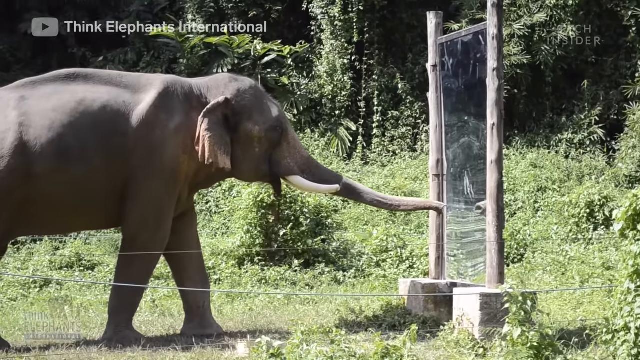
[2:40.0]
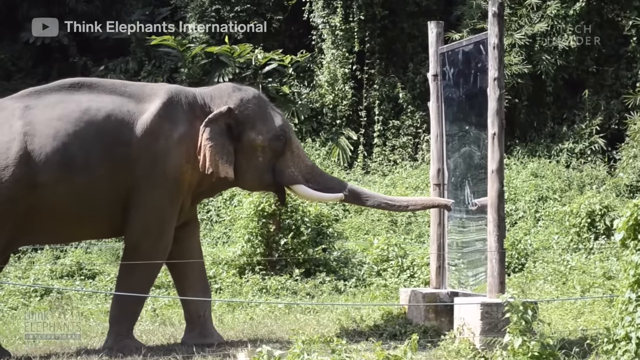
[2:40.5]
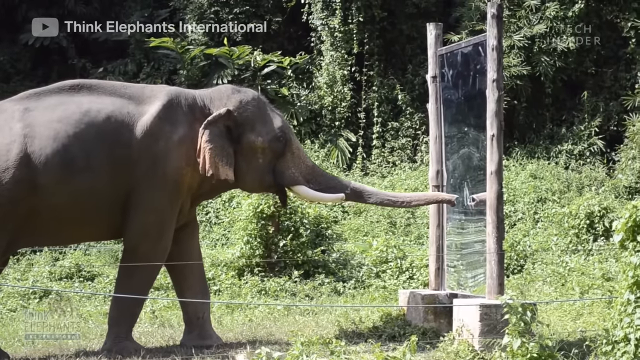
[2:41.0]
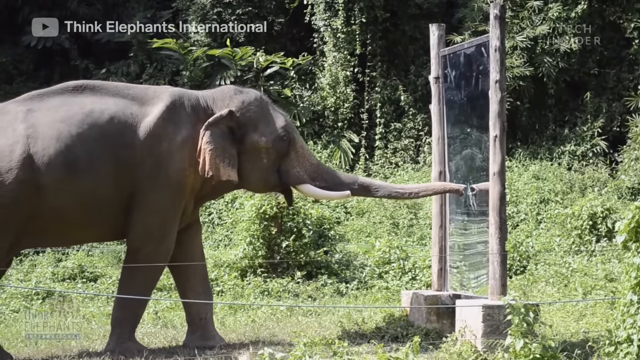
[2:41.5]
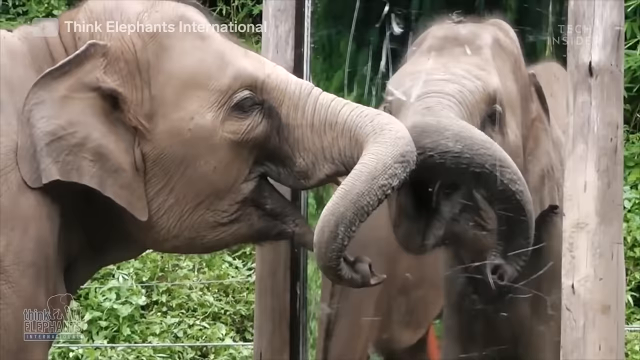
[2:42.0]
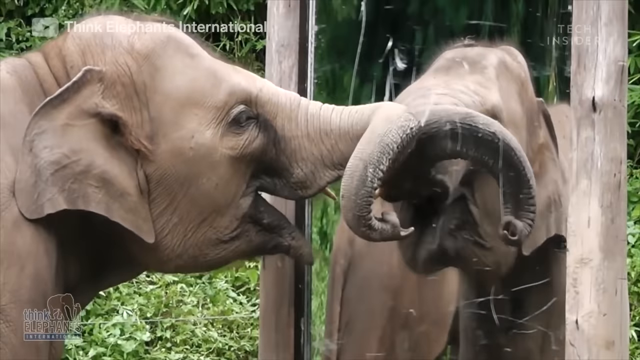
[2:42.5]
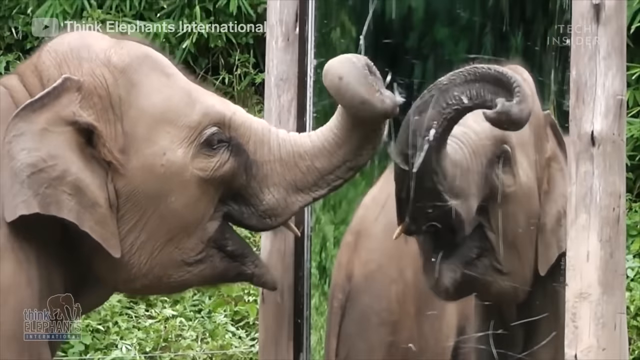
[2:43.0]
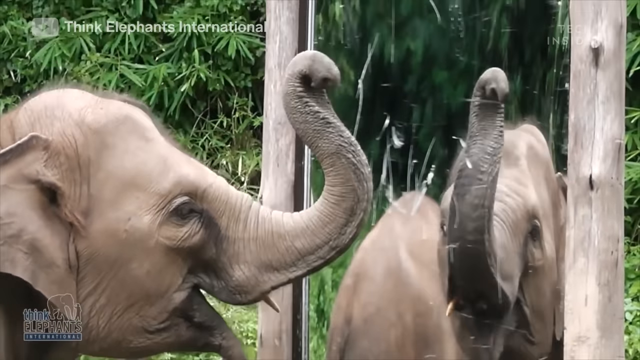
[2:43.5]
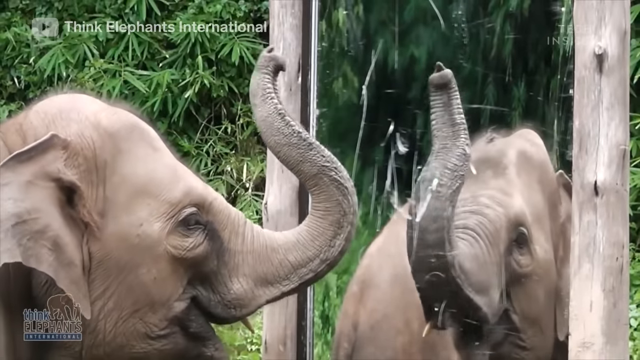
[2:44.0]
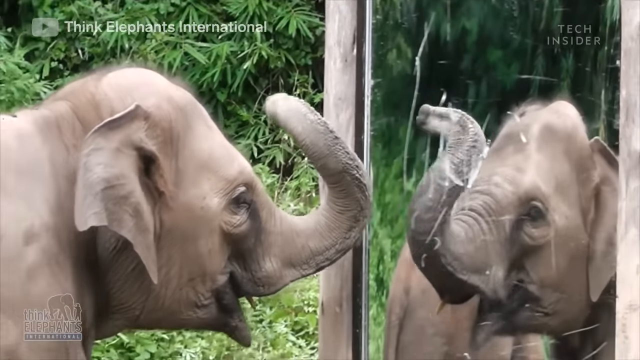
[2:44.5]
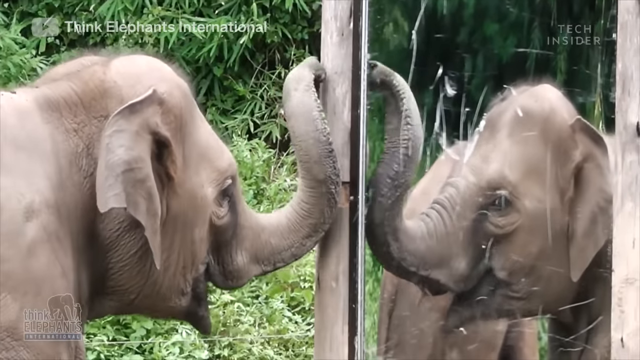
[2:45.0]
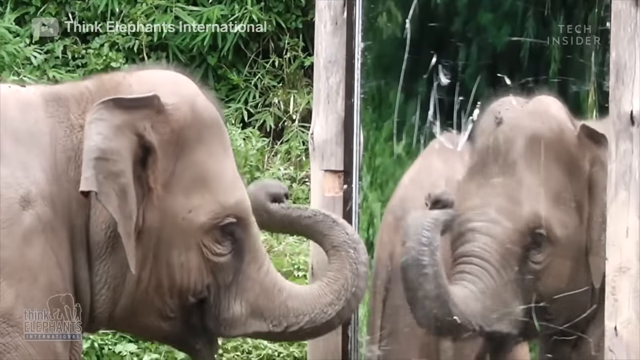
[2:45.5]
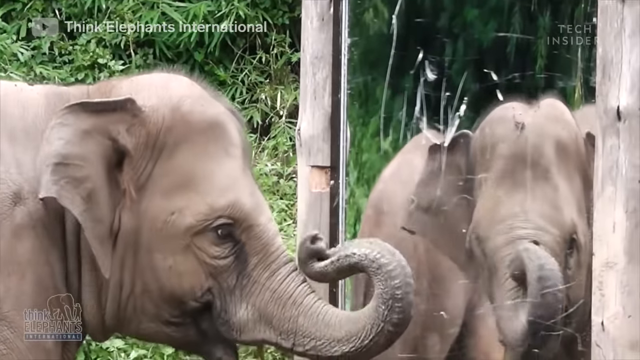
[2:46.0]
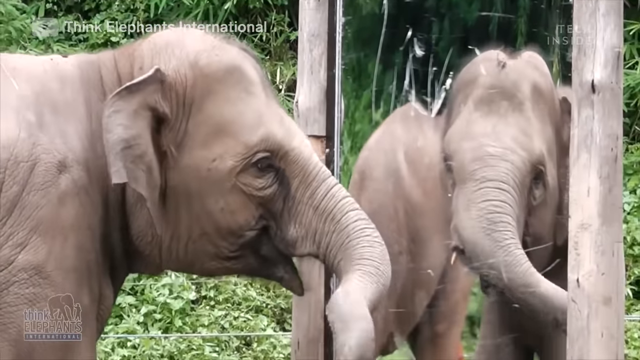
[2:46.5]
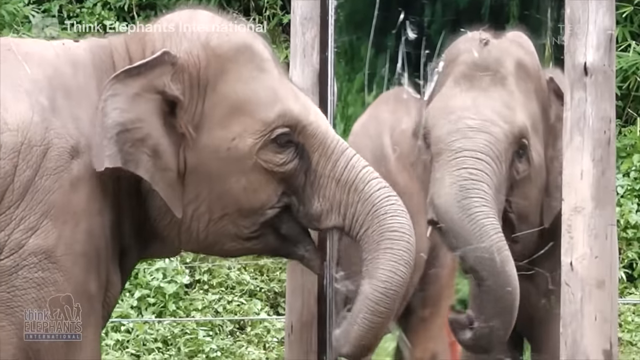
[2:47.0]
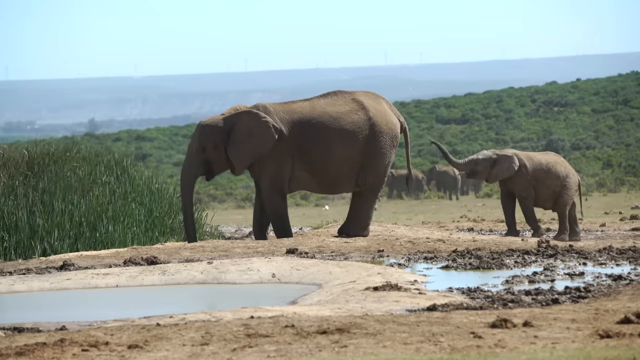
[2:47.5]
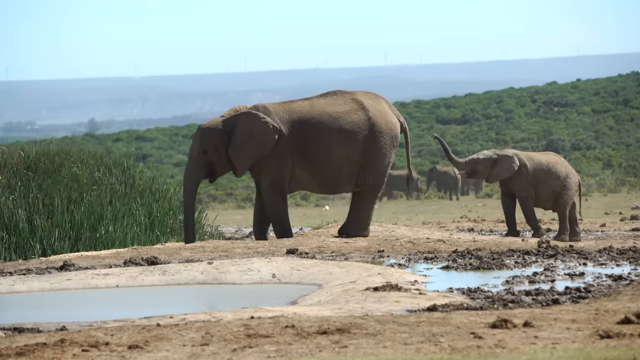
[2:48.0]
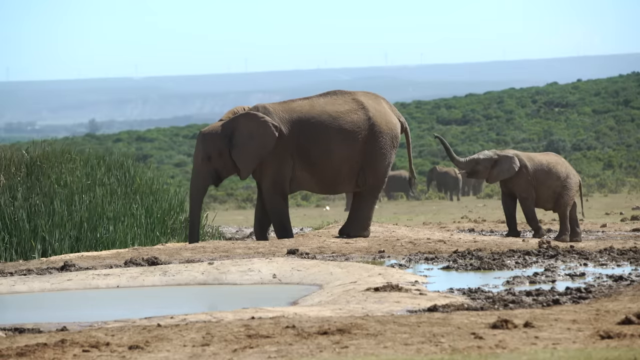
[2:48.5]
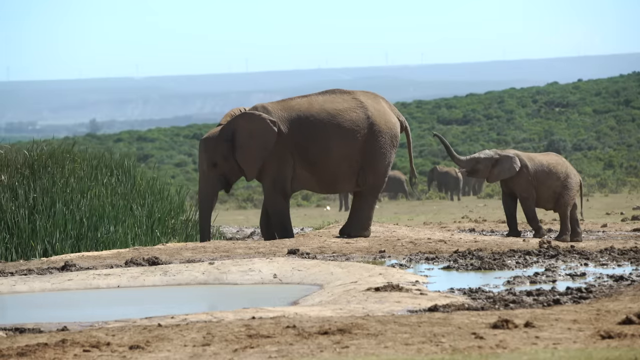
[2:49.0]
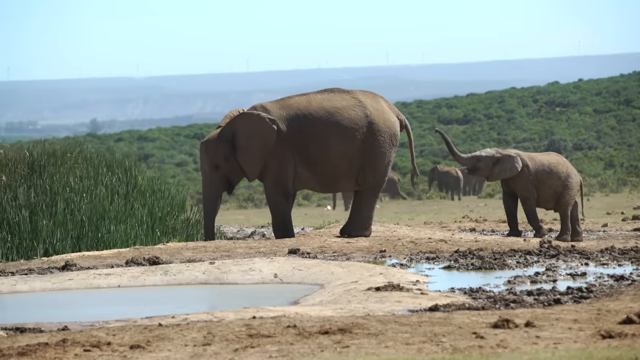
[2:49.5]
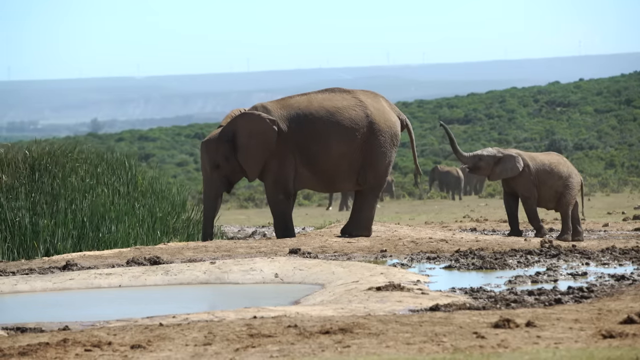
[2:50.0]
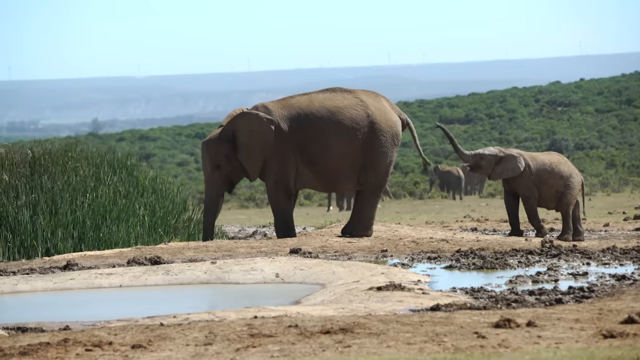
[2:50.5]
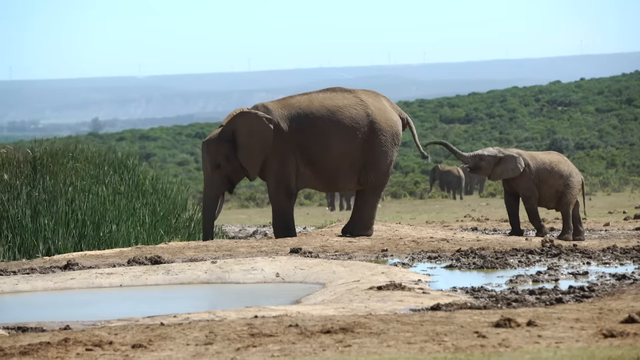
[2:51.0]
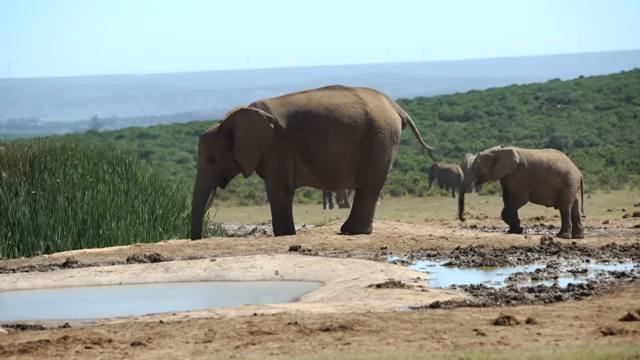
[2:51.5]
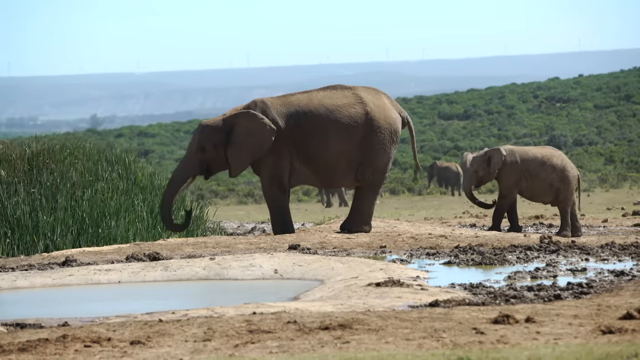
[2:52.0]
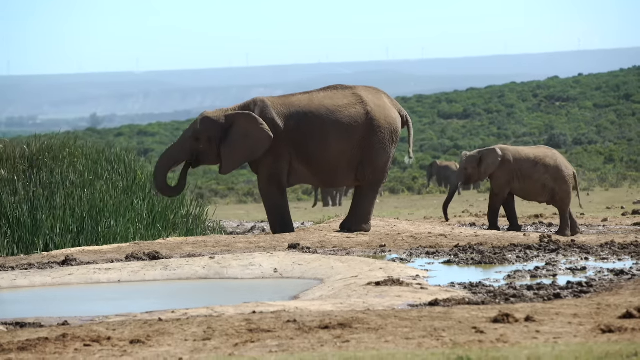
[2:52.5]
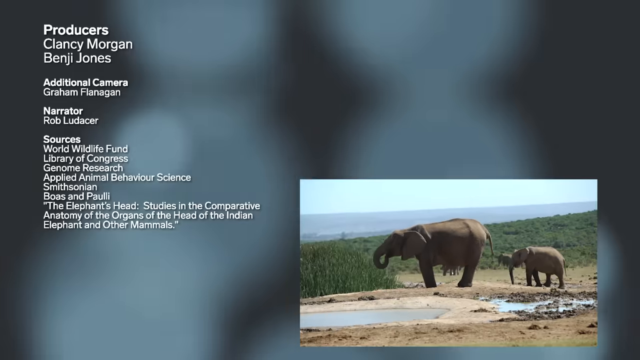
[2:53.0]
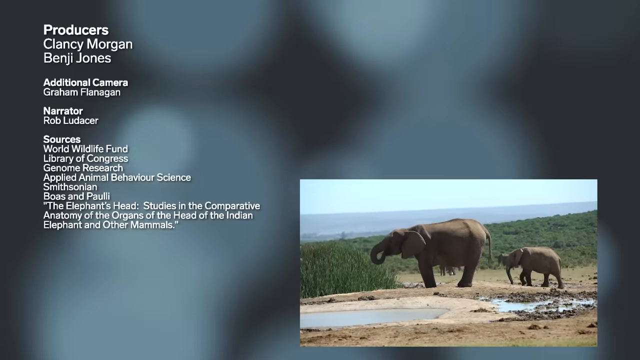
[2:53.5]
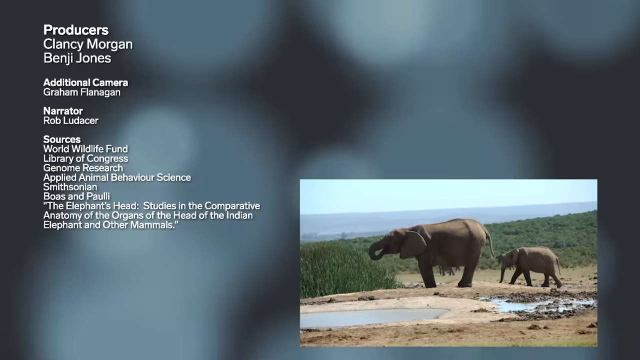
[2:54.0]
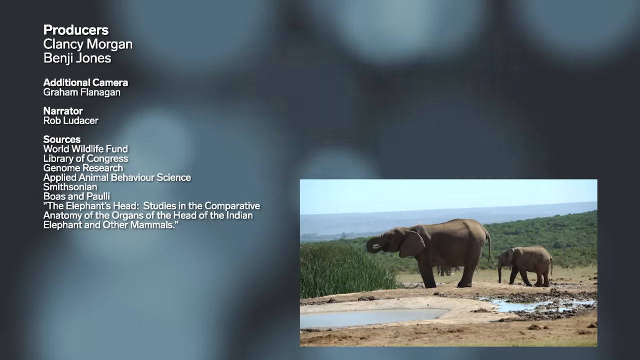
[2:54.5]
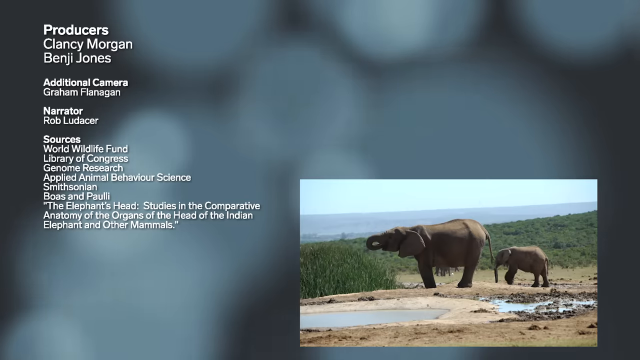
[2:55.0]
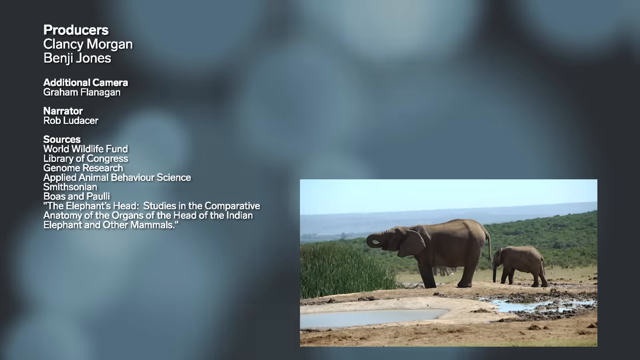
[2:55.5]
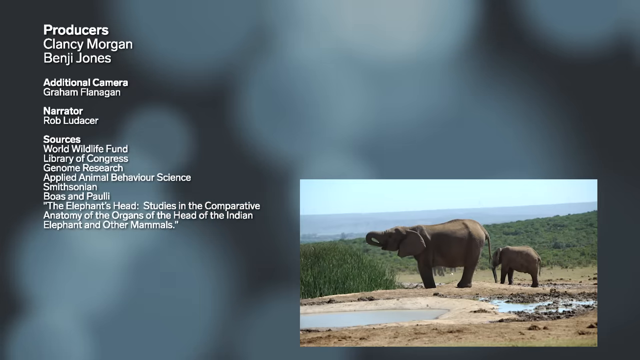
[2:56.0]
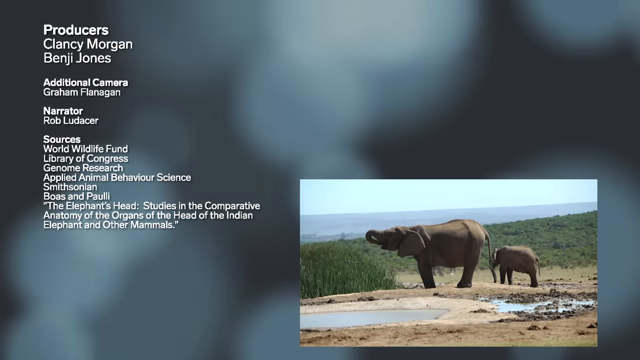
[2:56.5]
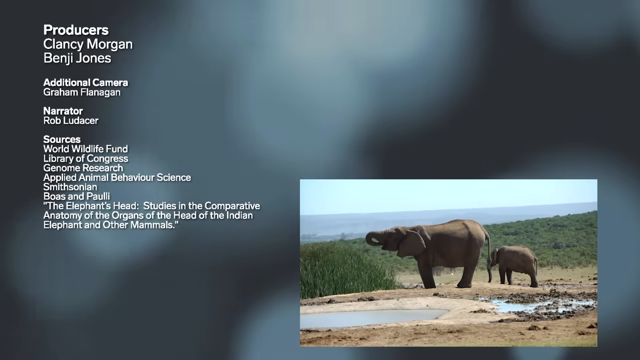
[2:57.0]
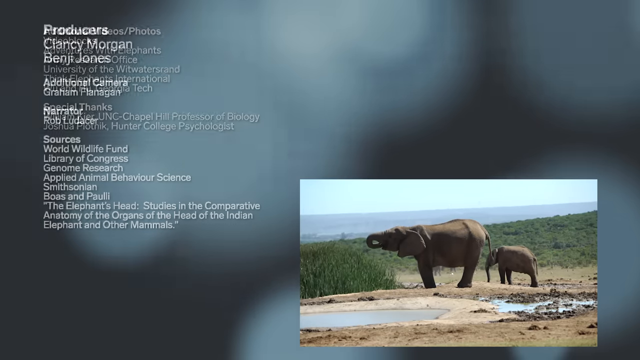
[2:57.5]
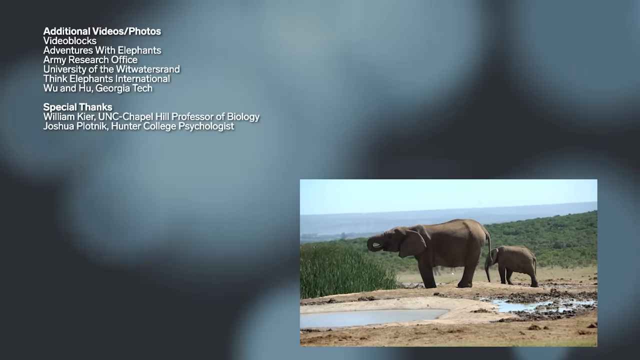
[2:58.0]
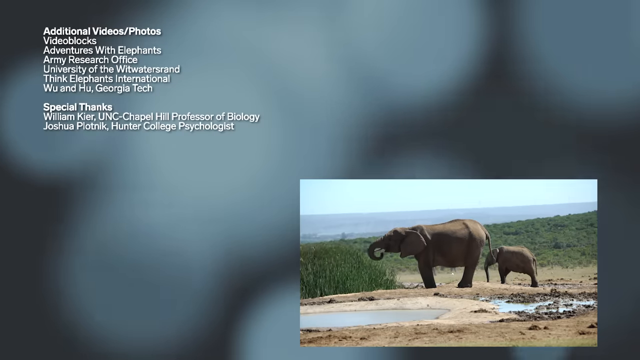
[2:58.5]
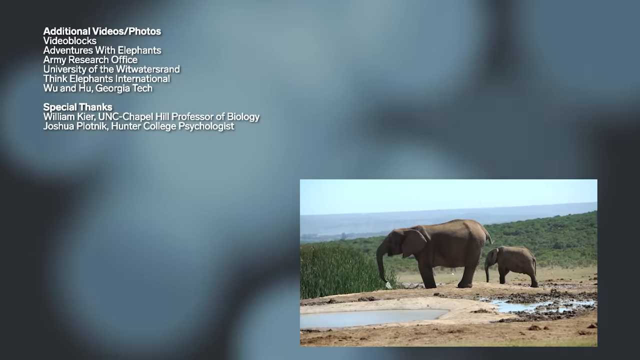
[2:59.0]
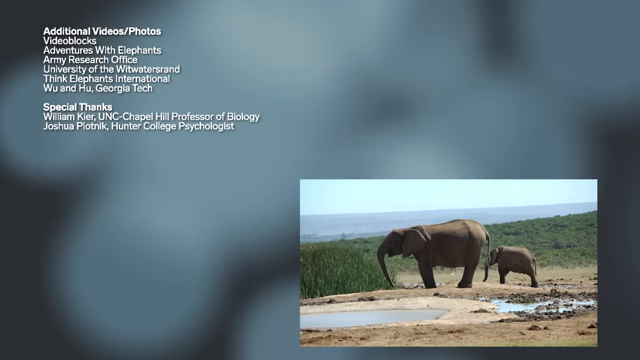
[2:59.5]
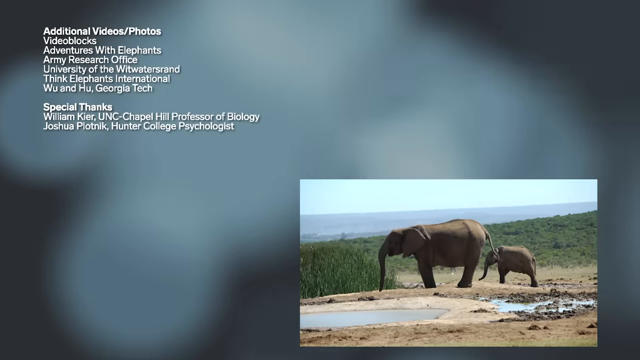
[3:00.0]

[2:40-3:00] Another, smaller elephant appears, then a small one behind a big one that is eating. The image becomes smaller and moves to the right side in a picture-in-picture framing, against a blurry background. On the left side, credits list the contributors: at the top in the largest font, "producers Clancy Morgan and Benji Jones"; below, "additional camera" with Graham Flanagan; below that, the narrator identified as Rob Ludeser. Sources follow, including World Wildlife Fund, Library of Congress, Genome Research, Applied Animal Behavior Science and Smithsonian. Additional video/photos are then credited, including Adventures with Elephants, Army Research Office and Georgia Tech, with special thanks to William Kier and Joshua Piotnik, and the video concludes.